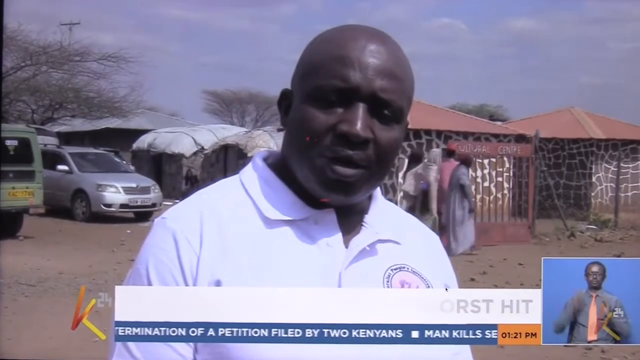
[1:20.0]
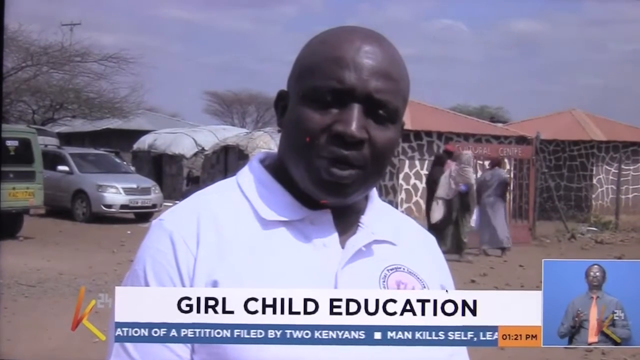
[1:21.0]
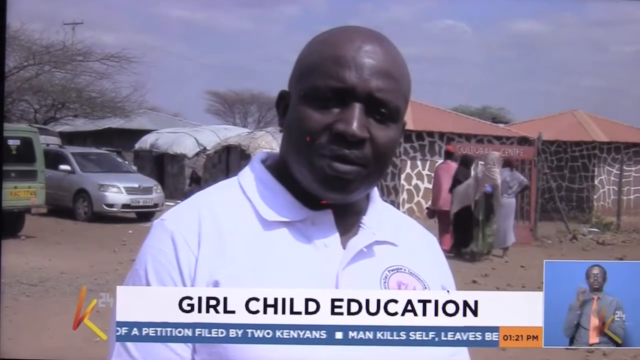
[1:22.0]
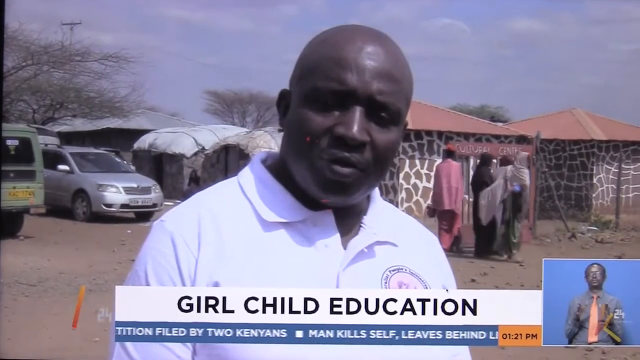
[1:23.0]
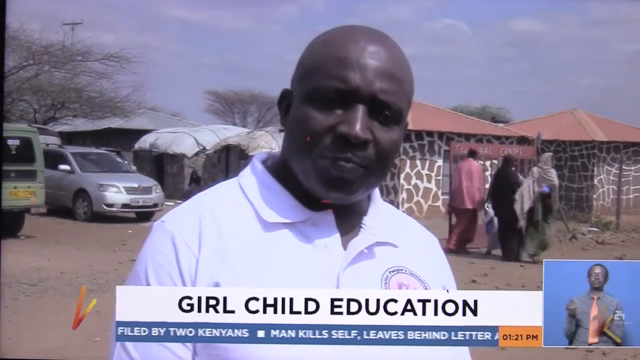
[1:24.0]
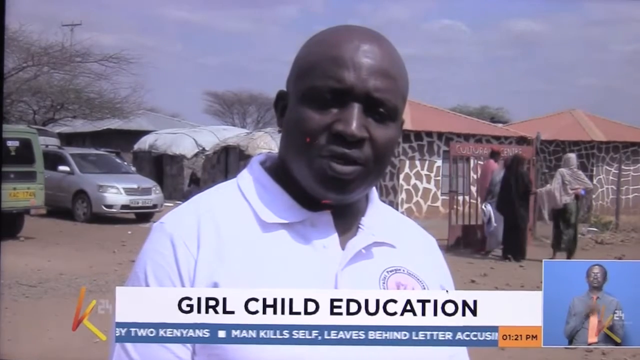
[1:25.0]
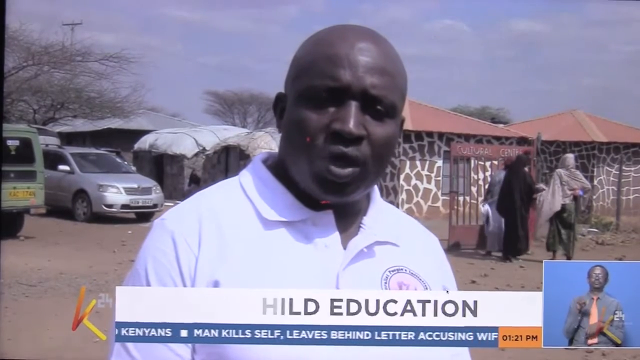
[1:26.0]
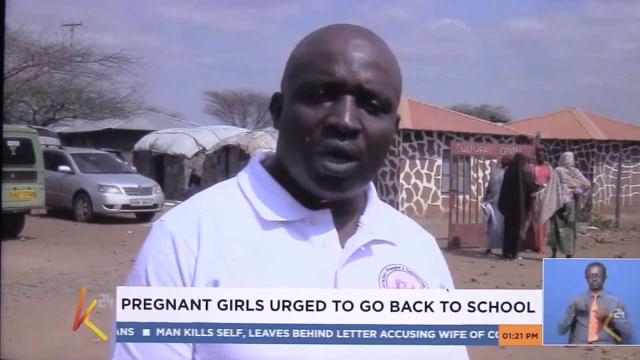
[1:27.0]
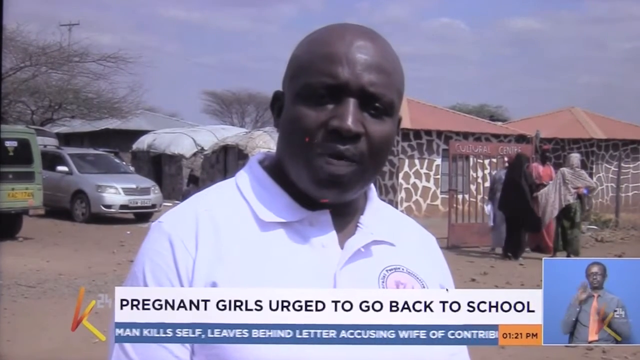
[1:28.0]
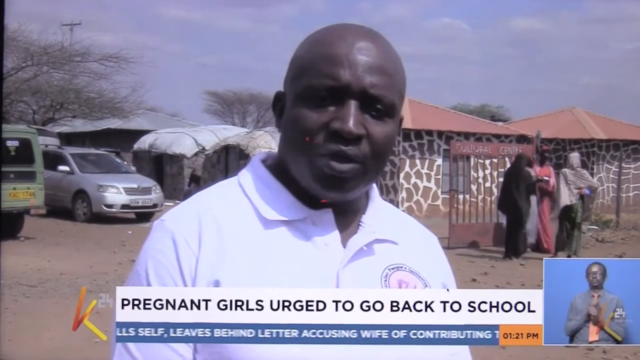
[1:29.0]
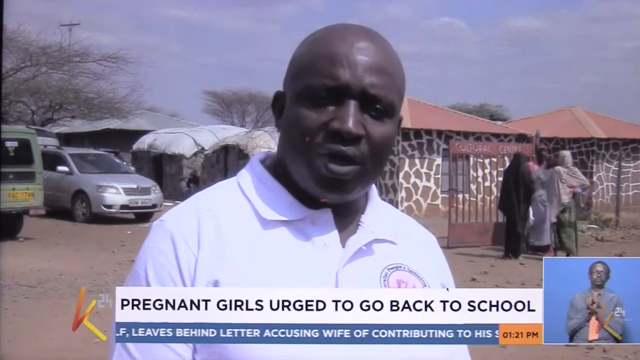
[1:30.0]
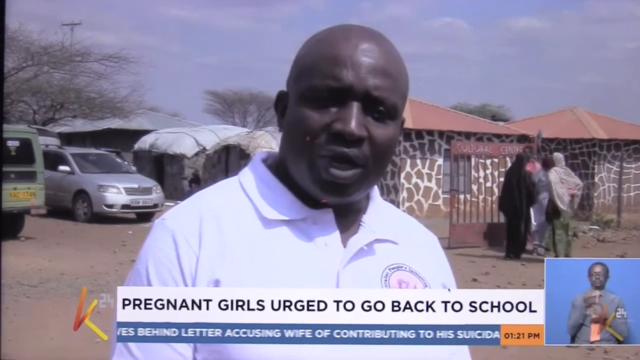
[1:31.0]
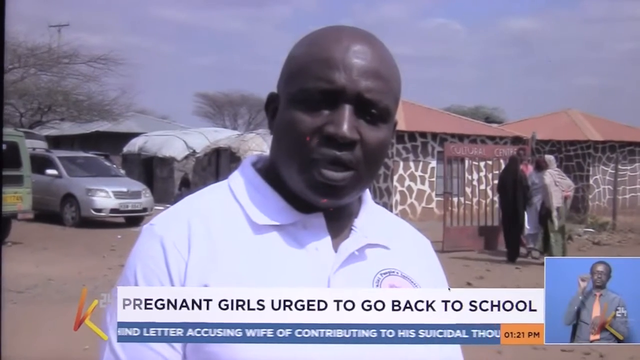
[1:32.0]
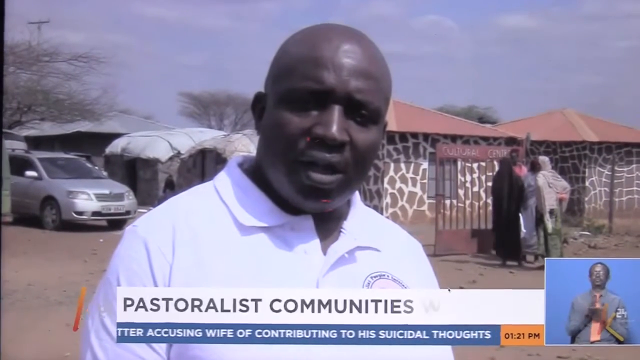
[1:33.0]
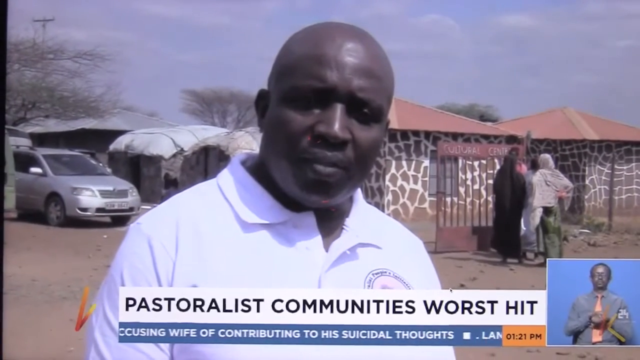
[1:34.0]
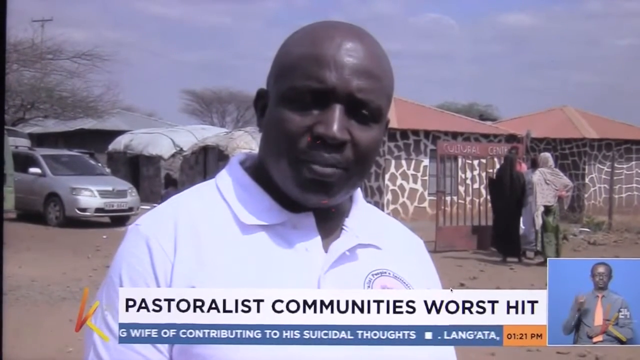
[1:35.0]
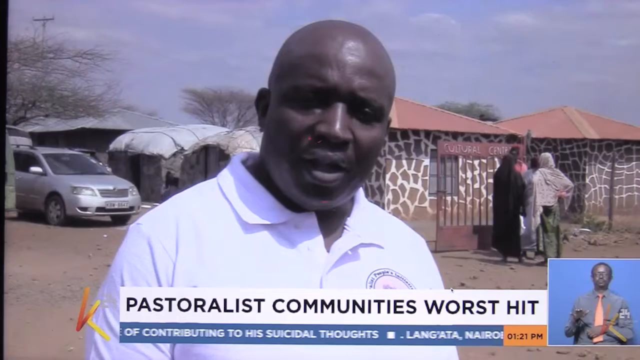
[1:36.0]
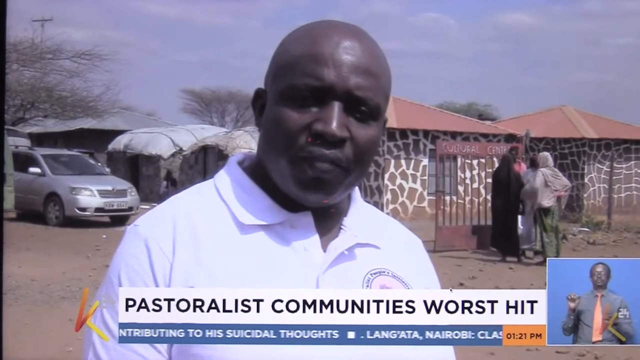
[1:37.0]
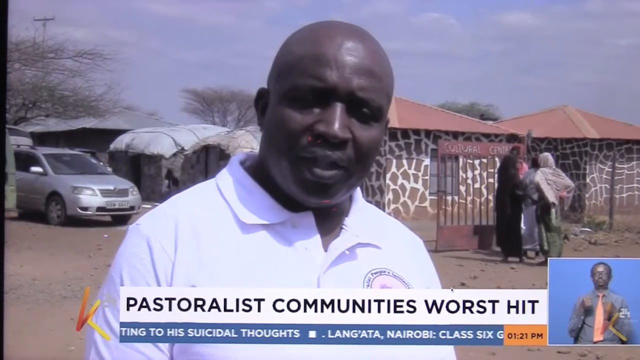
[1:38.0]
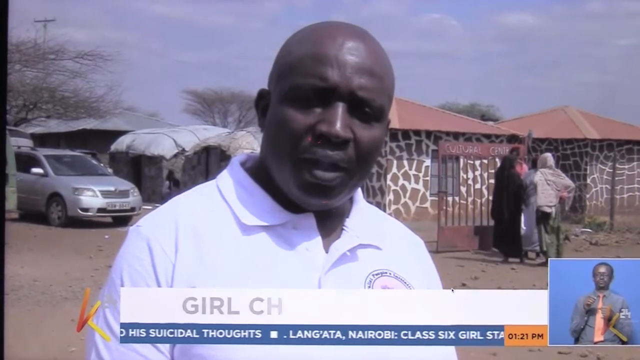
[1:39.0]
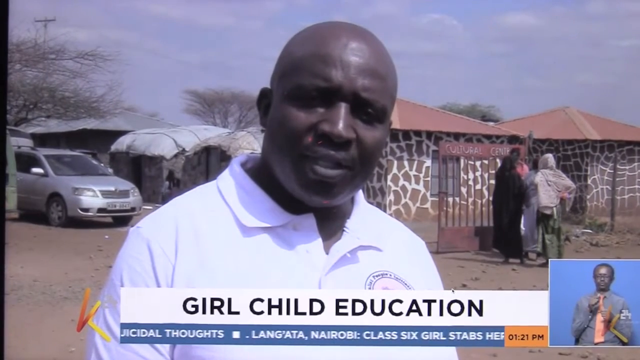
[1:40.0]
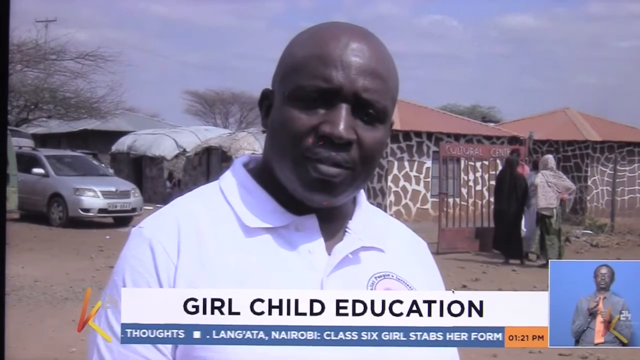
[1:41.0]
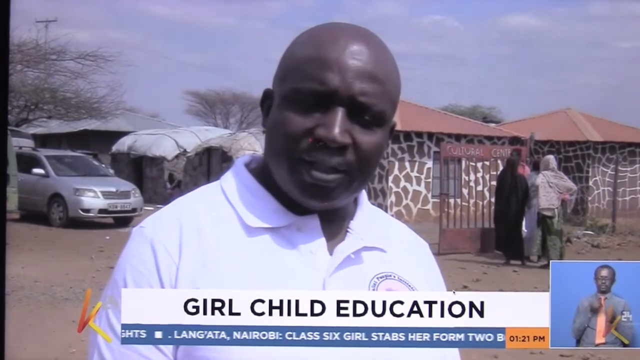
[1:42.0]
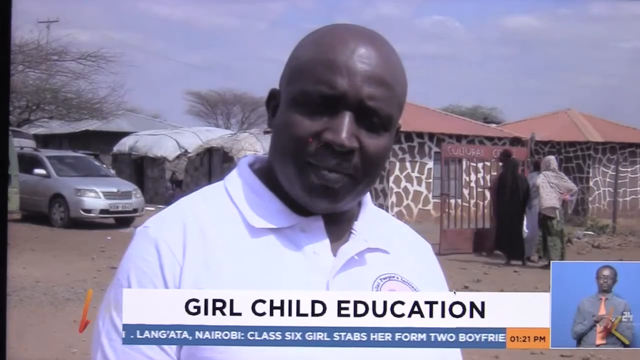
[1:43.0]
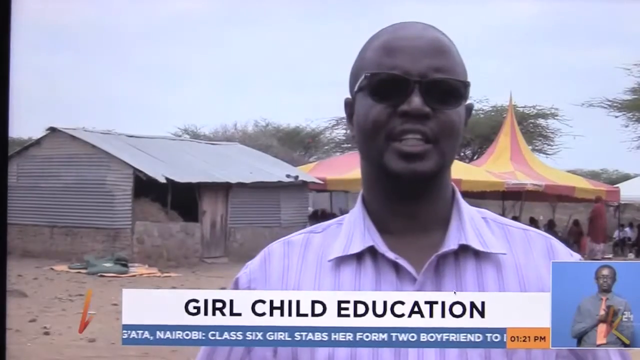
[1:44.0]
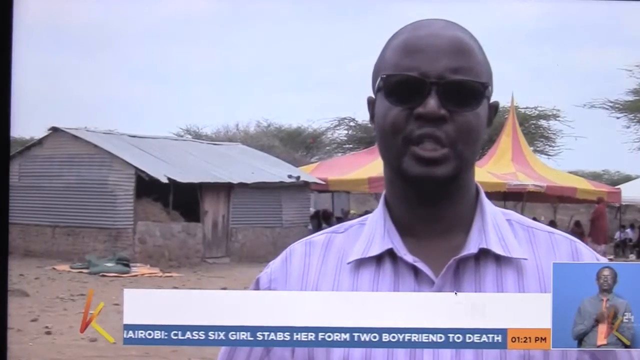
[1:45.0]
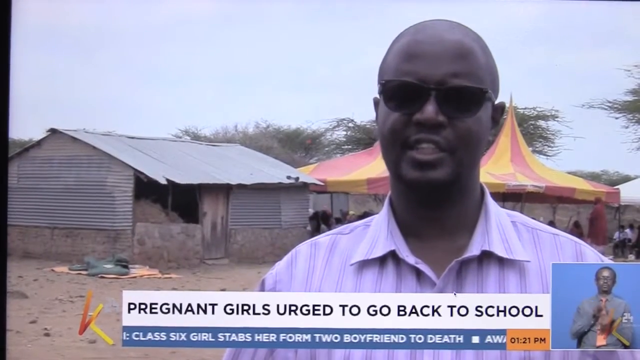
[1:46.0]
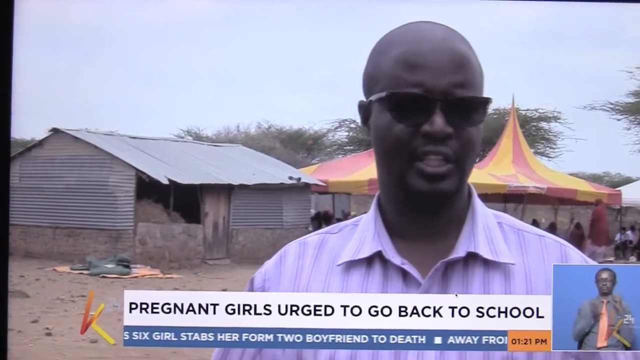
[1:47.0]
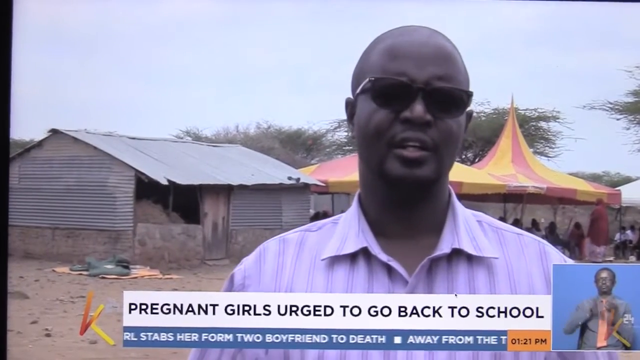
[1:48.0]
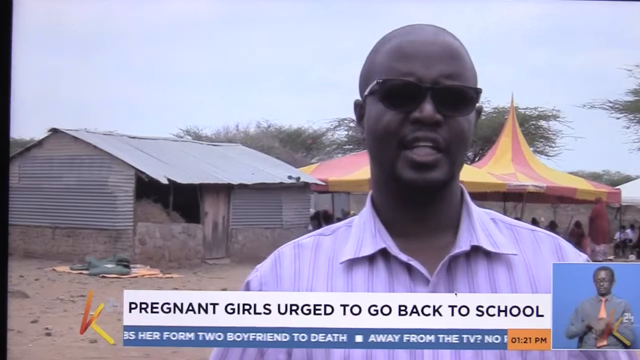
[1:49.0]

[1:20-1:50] In a separate rectangle in the bottom right of the screen, a man with dark skin does sign language; he wears a gray shirt and an orange or pink tie and may be wearing glasses. The main video shows a man with dark skin and a shaved head in a white polo top with a logo over his heart, talking to the camera as he is interviewed. Four or so people, mostly women, walk behind his shoulder to the right of the screen. Behind him are two buildings with red roofs whose bricks look like giraffe skin, and the four people move toward a red gate in front of the buildings, over his shoulder to the left. There are a couple of cars; one looks like a silver Mercedes-Benz. The words "girl child education" appear at the bottom of the screen, and the sign language interpreter continues to motion. The words "pregnant girls urge to go back to school" continue on the screen, and the words "pastoralist communities" also appear. The man continues talking, then the video switches to another man wearing a purple shirt with vertical stripes and sunglasses. Behind him is something that almost looks like a circus tent or carousel, and to the left of that is what looks like a run-down tin shed.